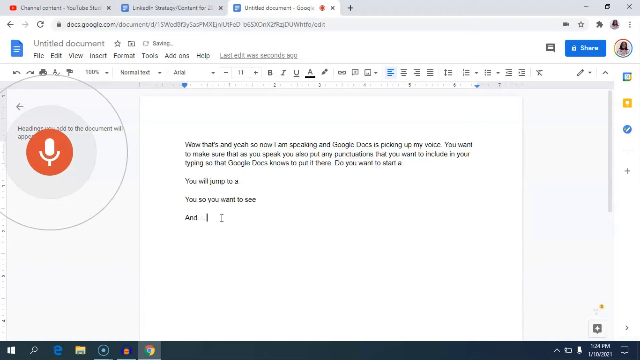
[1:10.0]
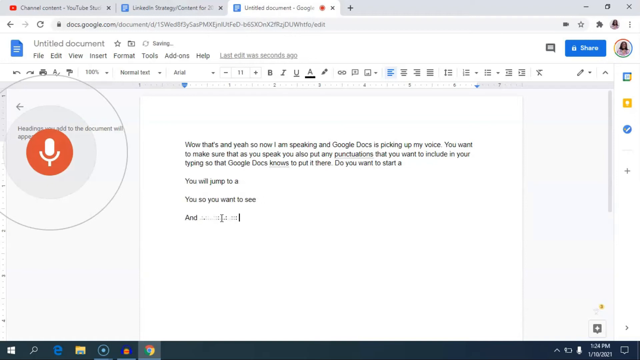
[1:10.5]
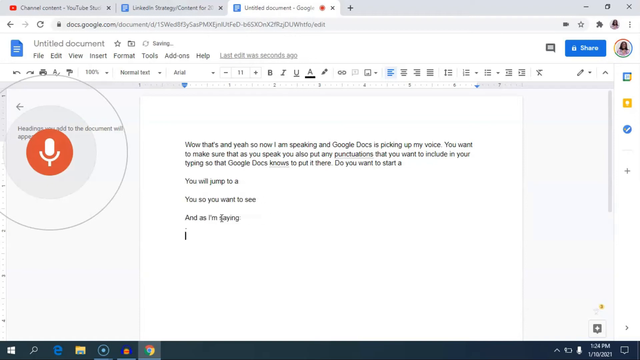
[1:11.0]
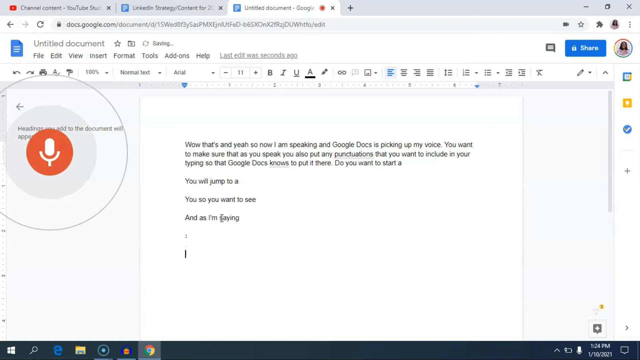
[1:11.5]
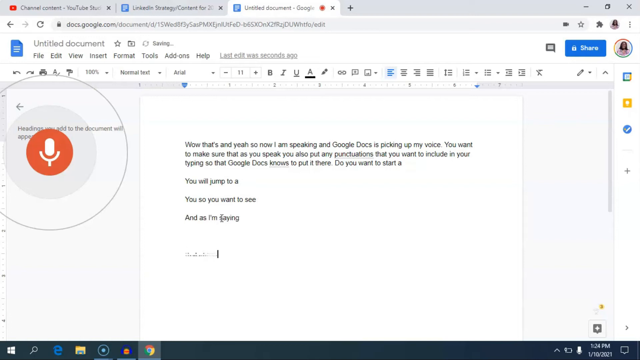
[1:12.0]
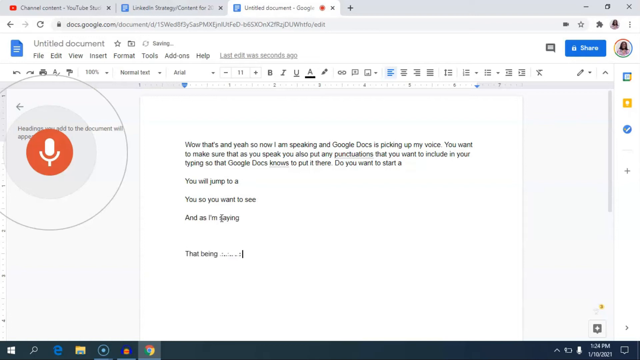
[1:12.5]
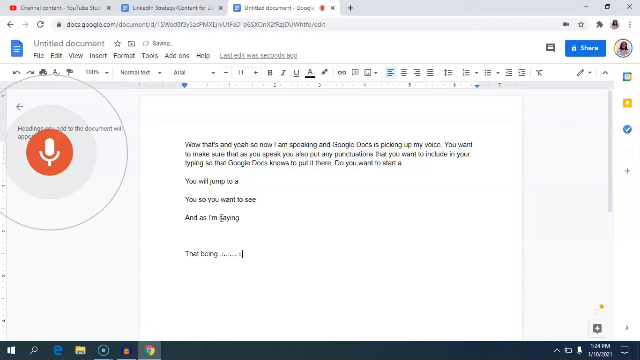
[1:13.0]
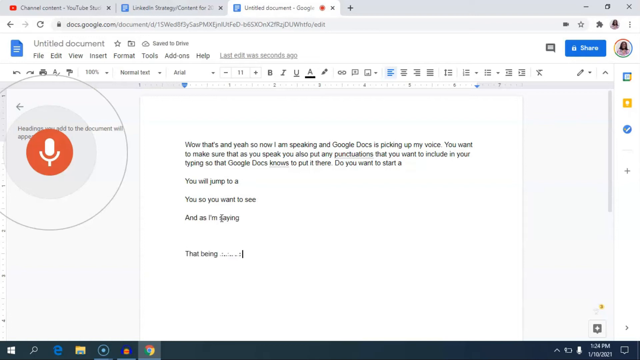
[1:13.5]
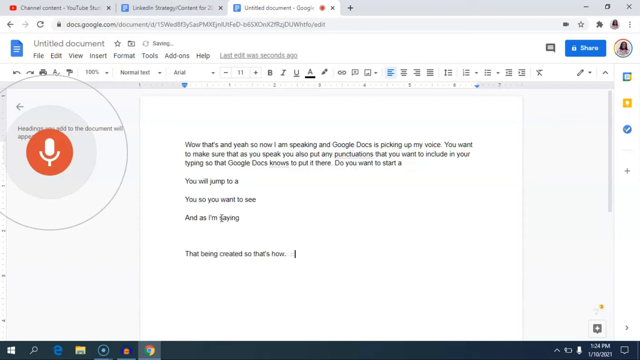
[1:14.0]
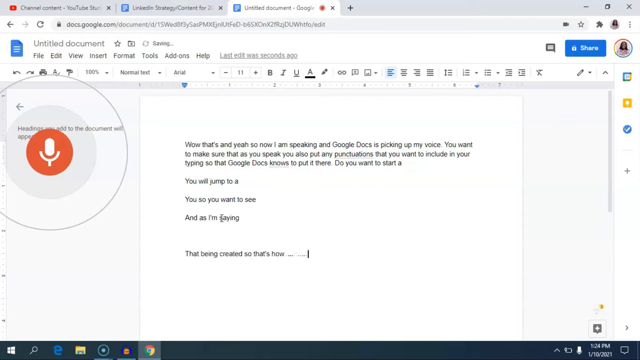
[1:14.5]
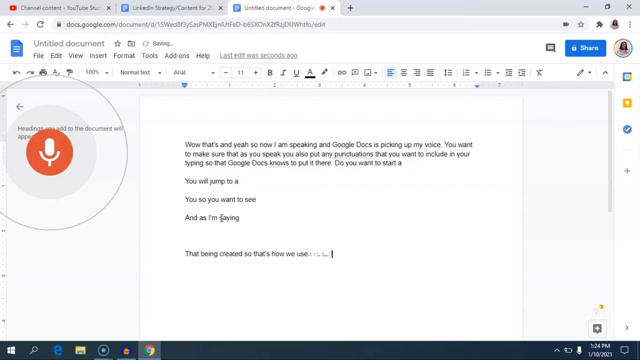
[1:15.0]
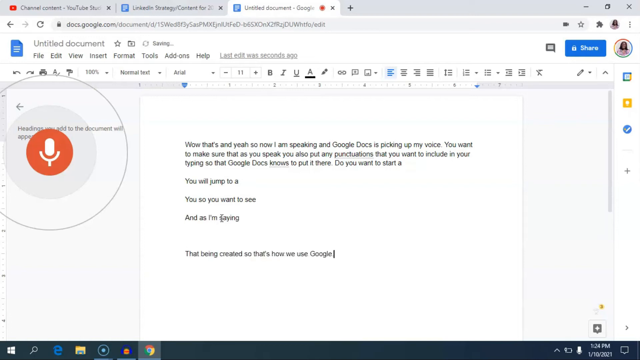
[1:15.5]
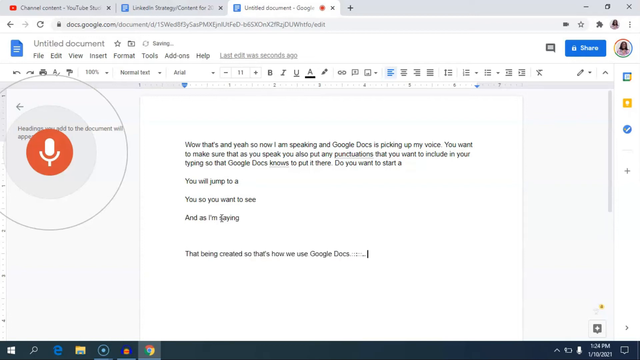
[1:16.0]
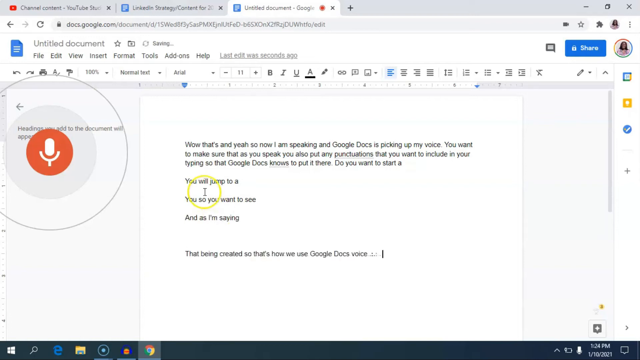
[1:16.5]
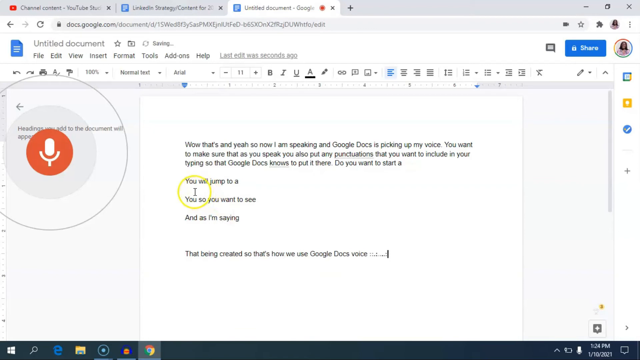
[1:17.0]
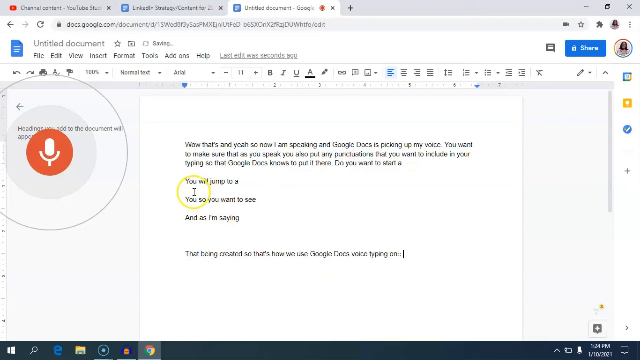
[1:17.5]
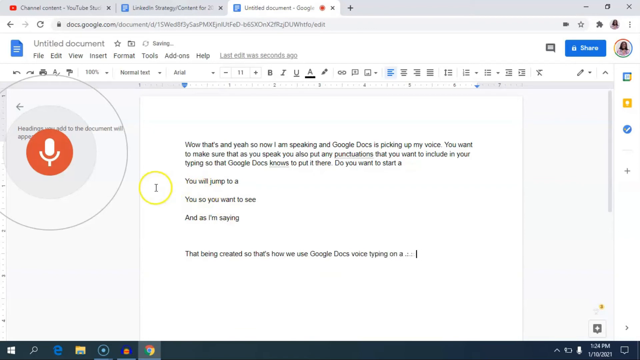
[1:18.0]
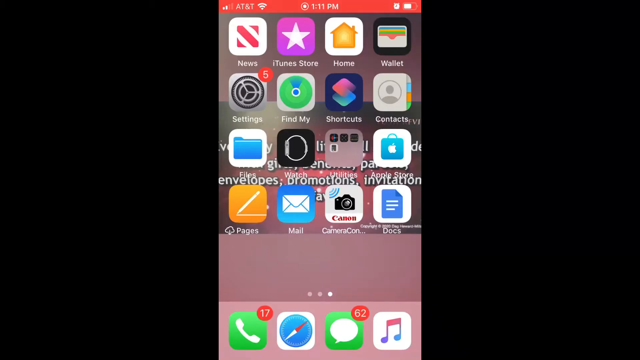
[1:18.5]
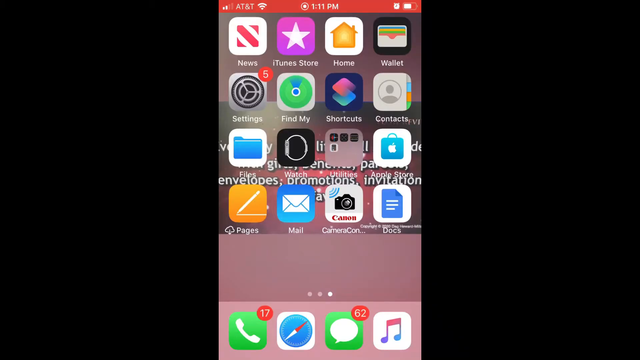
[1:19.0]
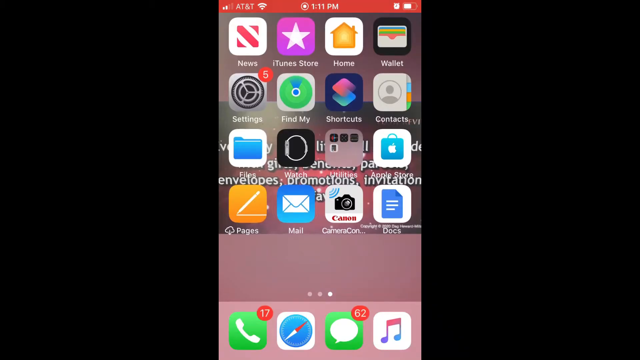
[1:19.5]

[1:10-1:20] The person continues using voice typing in Google Docs, adding a bit more text on the bottom line. The view then switches to a phone screen, which has a Google Docs app on it, apparently to show the same thing on the phone.